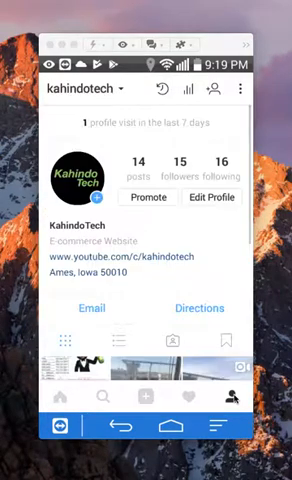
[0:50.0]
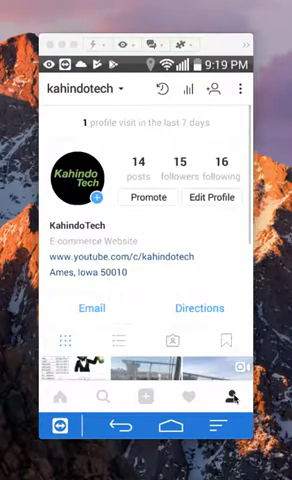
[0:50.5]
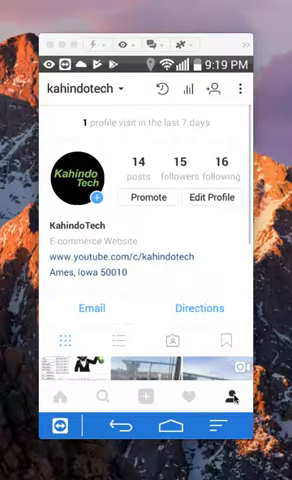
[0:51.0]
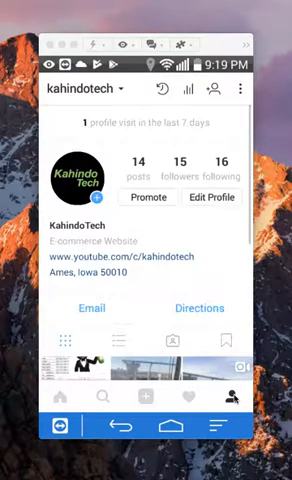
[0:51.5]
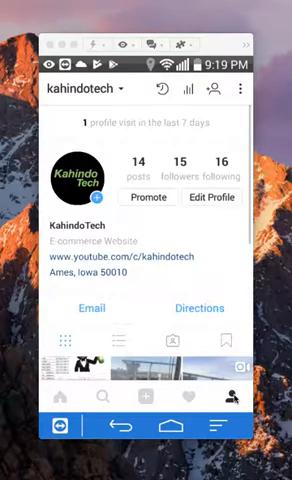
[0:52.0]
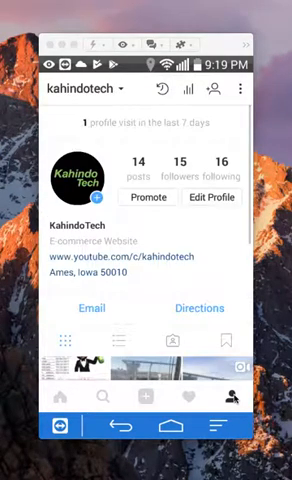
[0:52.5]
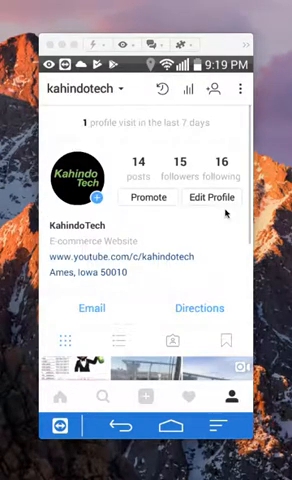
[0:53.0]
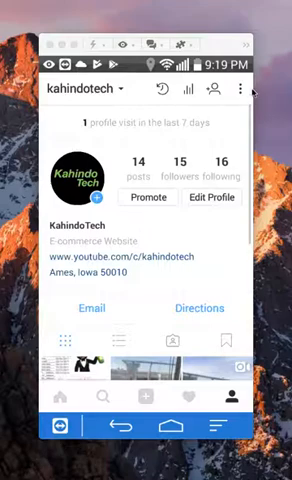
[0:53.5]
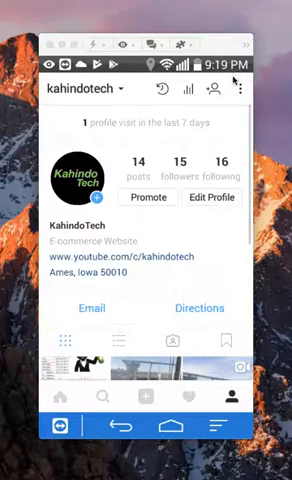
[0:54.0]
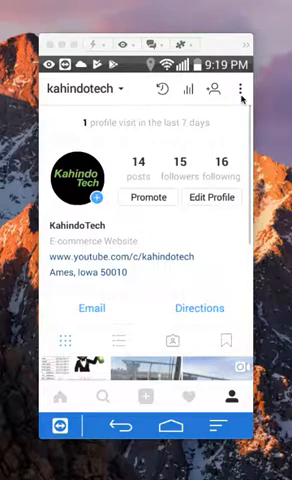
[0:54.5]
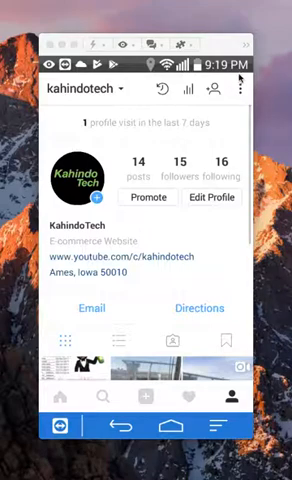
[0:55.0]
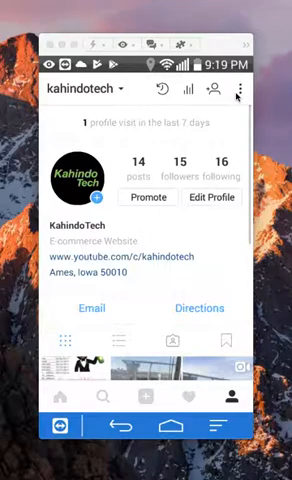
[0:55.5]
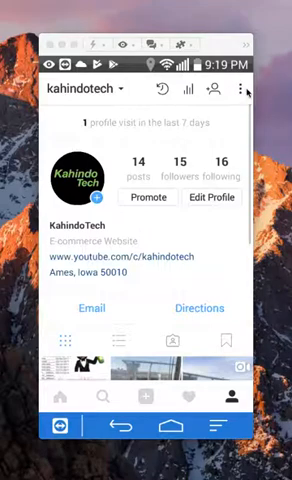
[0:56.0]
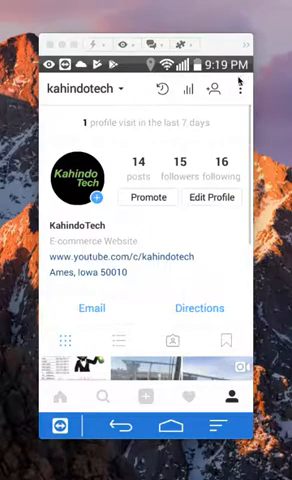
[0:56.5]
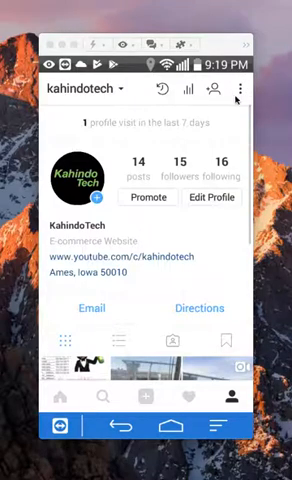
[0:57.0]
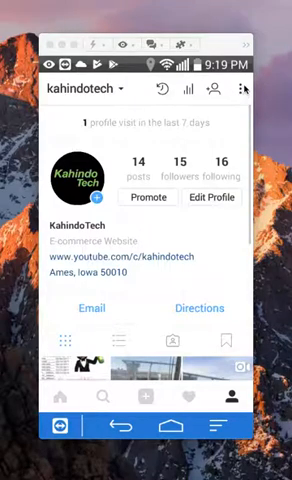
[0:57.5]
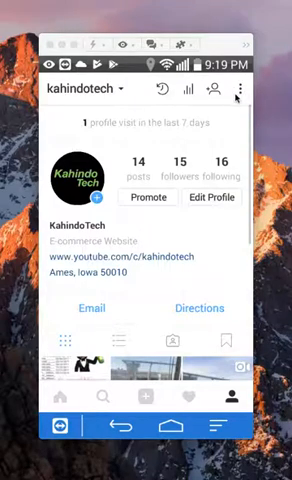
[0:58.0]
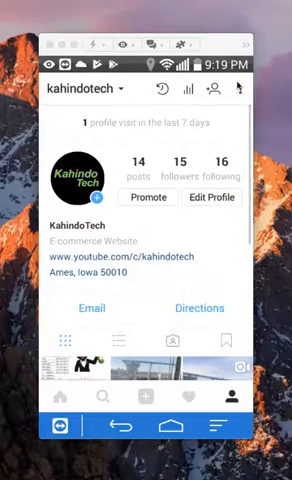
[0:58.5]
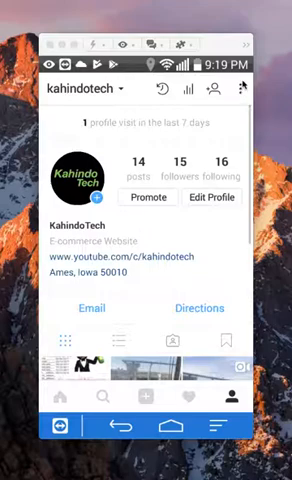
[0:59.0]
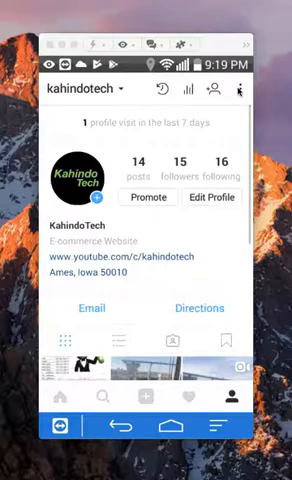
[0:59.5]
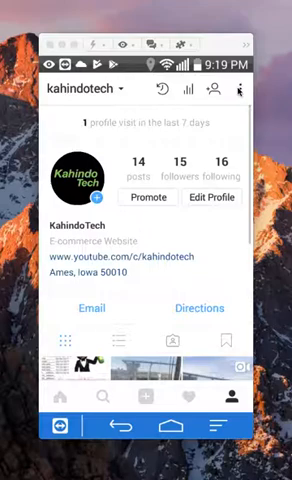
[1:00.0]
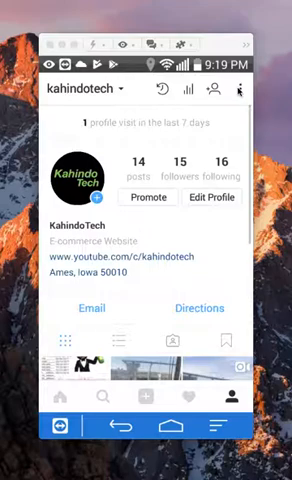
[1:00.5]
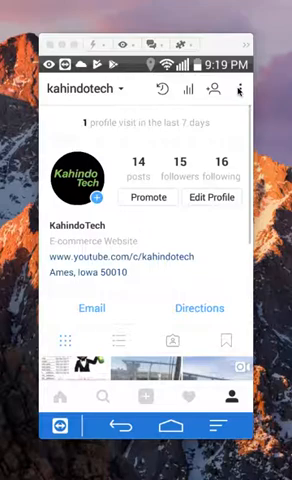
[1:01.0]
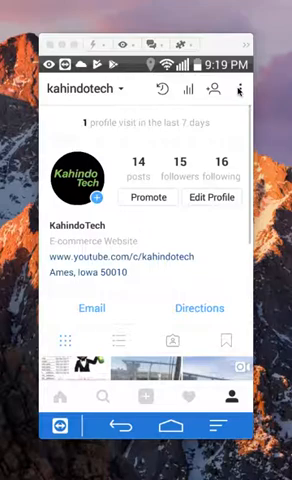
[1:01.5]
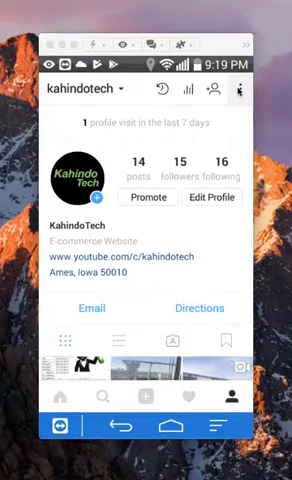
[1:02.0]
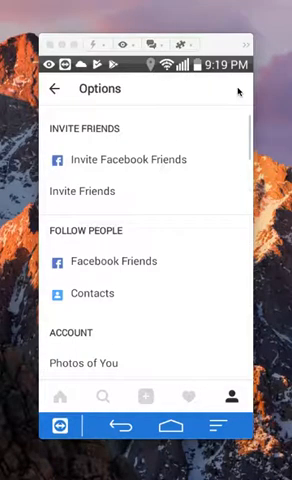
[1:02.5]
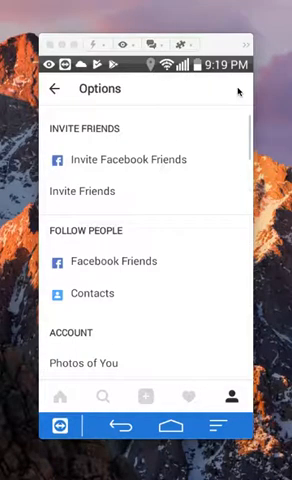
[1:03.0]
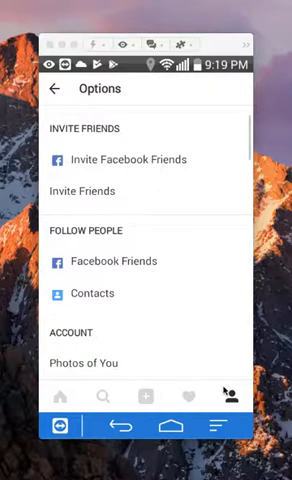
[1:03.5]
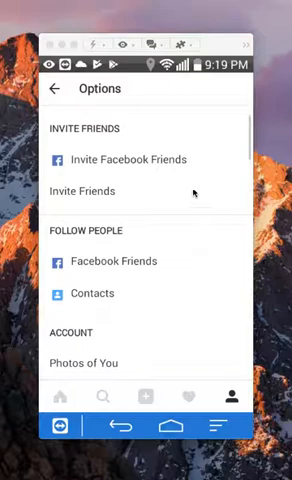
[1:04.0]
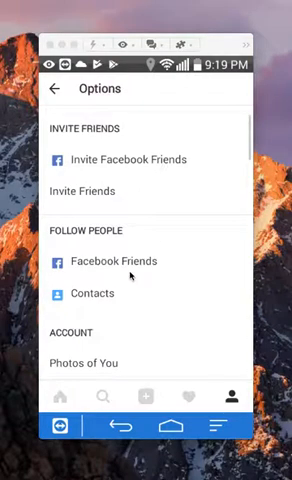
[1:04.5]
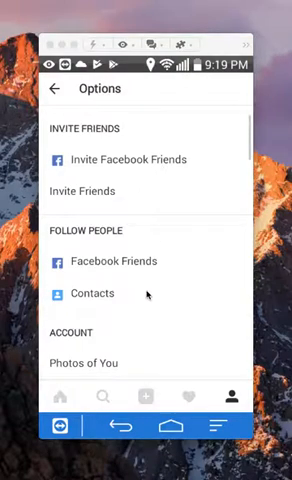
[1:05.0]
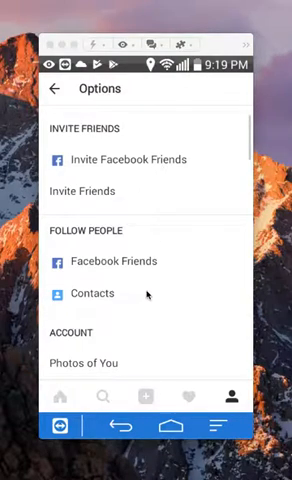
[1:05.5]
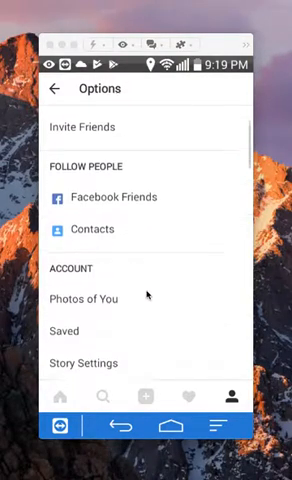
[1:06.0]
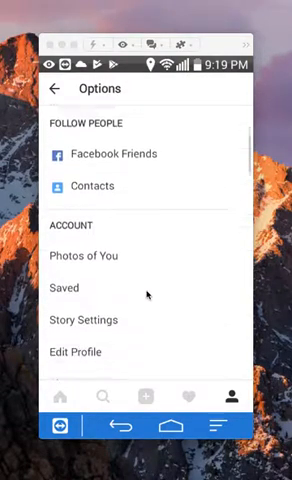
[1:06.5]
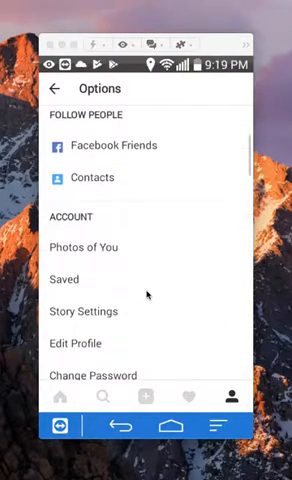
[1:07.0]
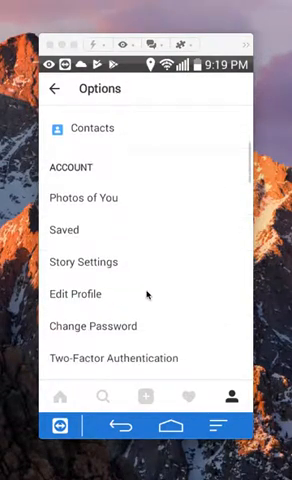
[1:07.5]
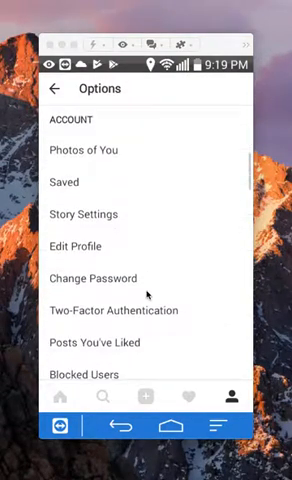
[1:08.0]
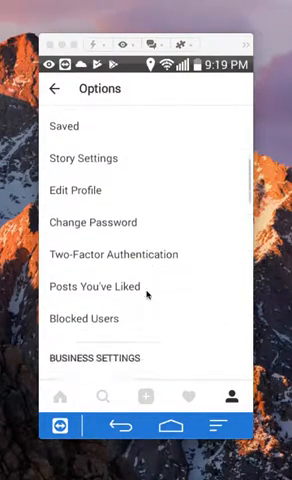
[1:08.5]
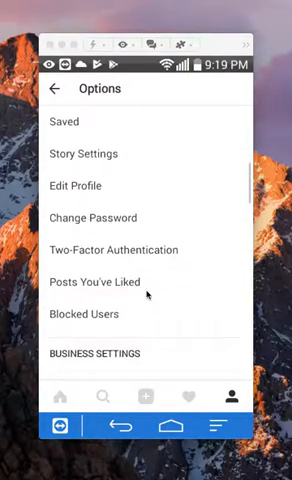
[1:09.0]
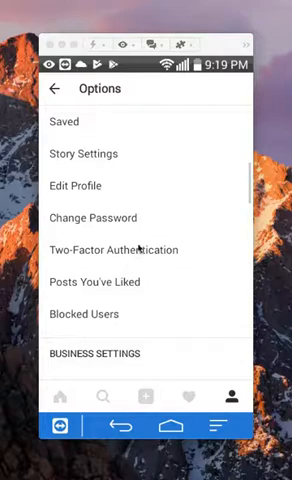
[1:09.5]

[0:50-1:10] A cell phone shows the Cahindo Tech profile. At the top are multiple icons: a timer icon, a person icon with a plus sign, and three vertical ellipses. The cursor circles these icons and selects them, and an options page comes up listing "Invite friends", "Invite Facebook friends", "Follow people", "Facebook friends", "Contacts", "Account" and "Photos of you". Scrolling down shows "Saved", "Settings", "Edit profile", "Change password", "Two-factor authentication", "Posts you've liked" and "Blocked users". The Kohindotek profile page shows "14 posts", "15 followers" and "16 following", a Promote button and an Edit profile button, the text "e-commerce website", a web address "www.youtube.com/seed/kohindotek", and a city, state and zip code, "Ames, Iowa 50010". There is an Email button and a Directions button.